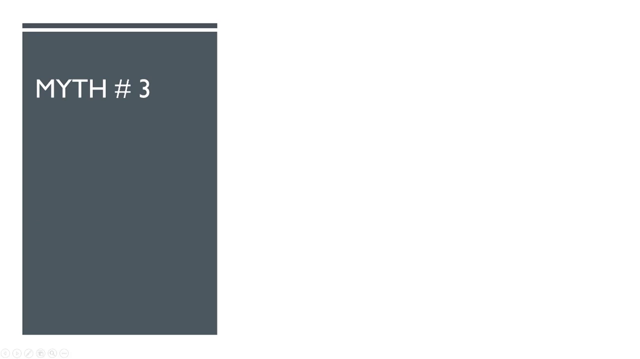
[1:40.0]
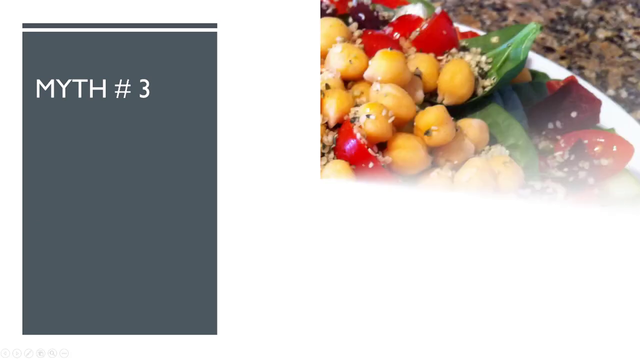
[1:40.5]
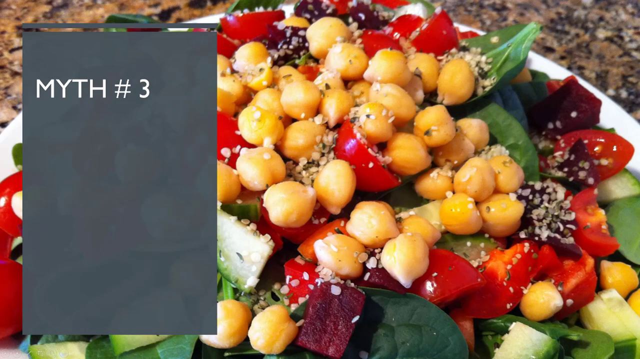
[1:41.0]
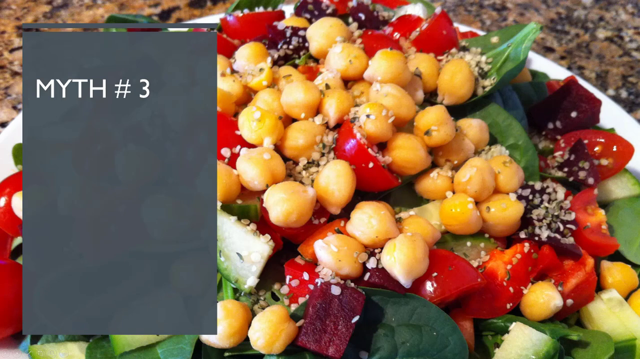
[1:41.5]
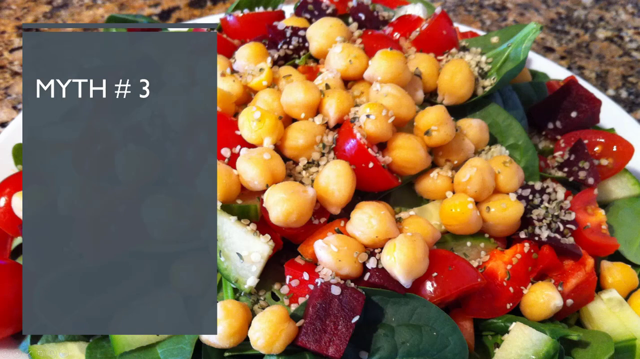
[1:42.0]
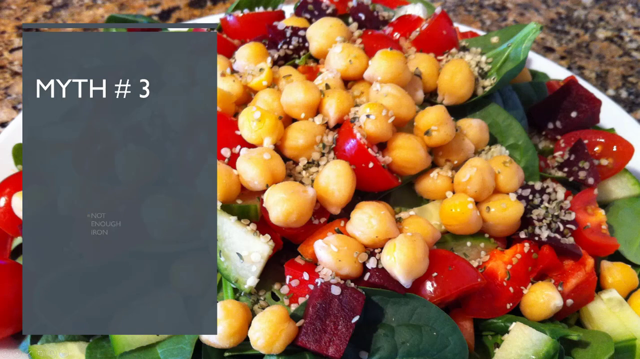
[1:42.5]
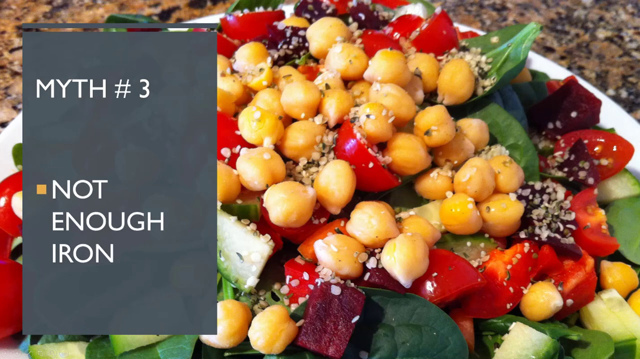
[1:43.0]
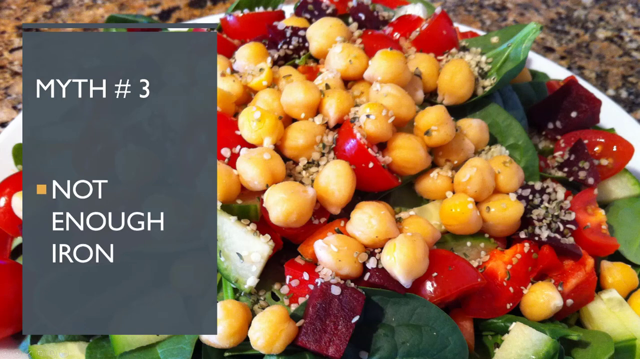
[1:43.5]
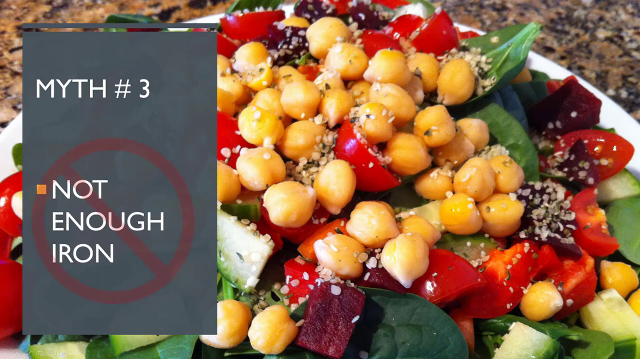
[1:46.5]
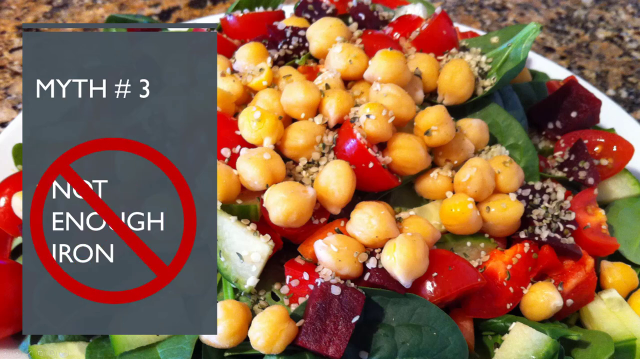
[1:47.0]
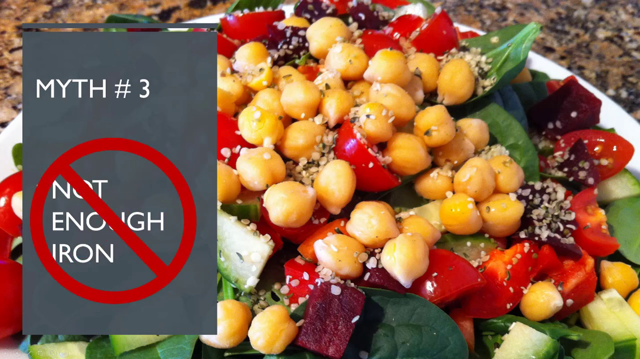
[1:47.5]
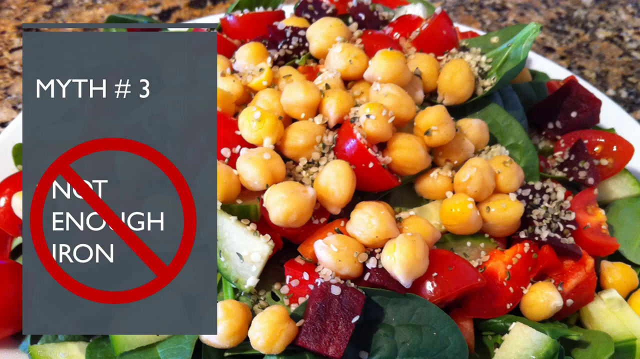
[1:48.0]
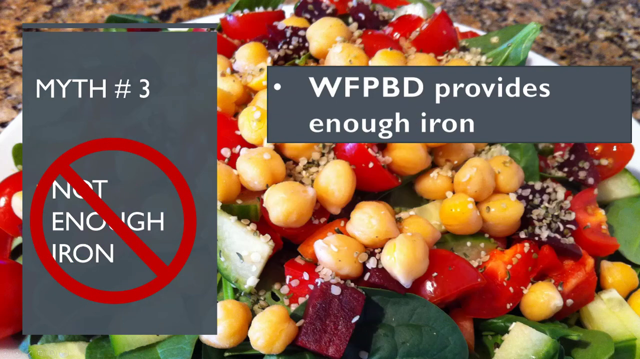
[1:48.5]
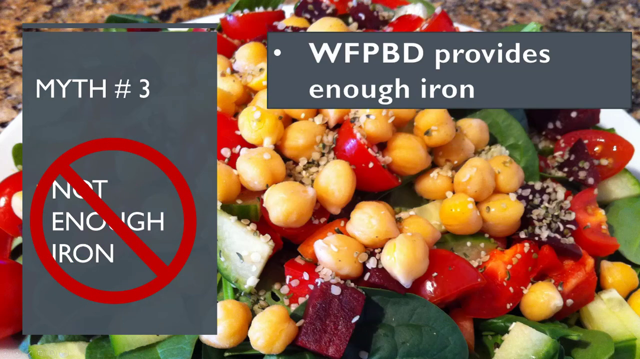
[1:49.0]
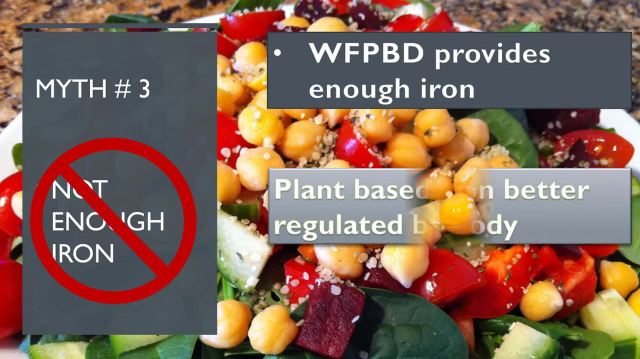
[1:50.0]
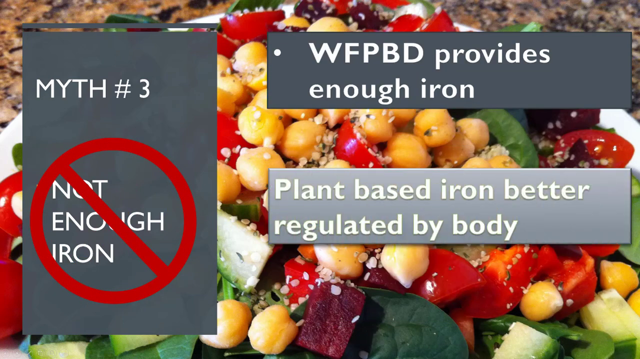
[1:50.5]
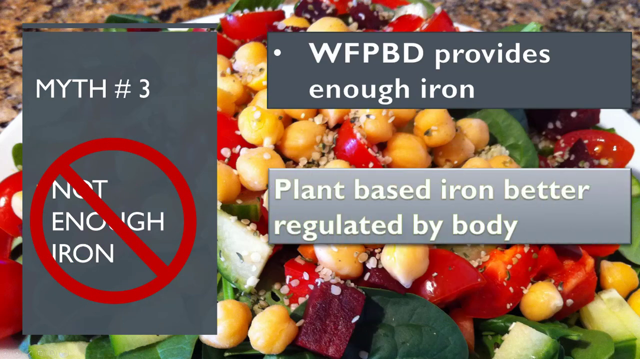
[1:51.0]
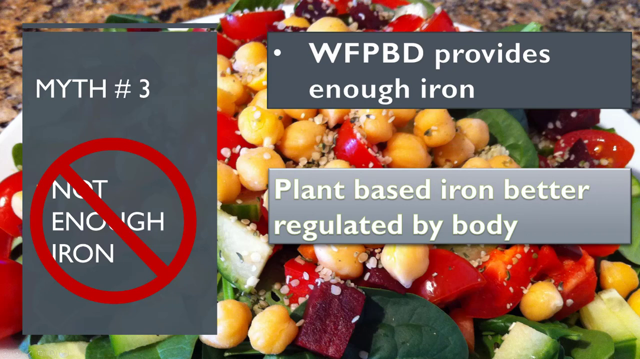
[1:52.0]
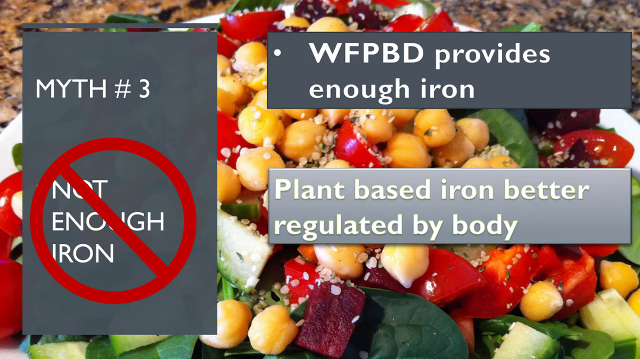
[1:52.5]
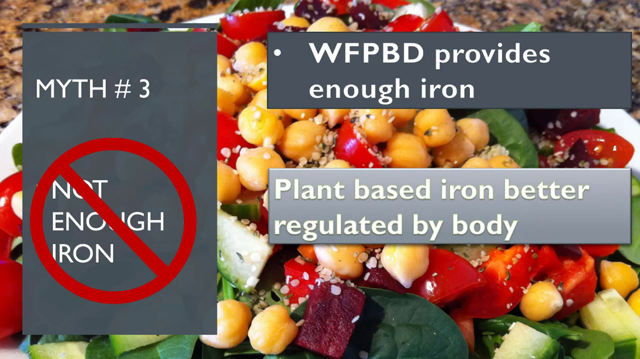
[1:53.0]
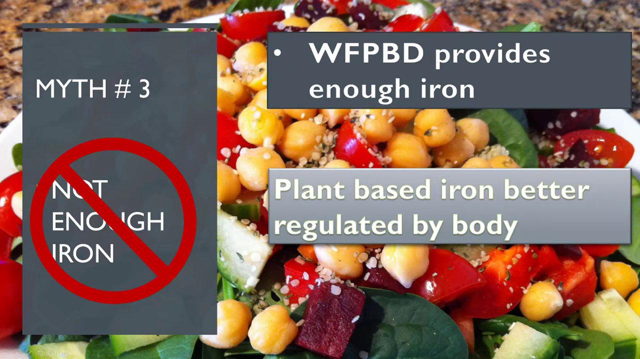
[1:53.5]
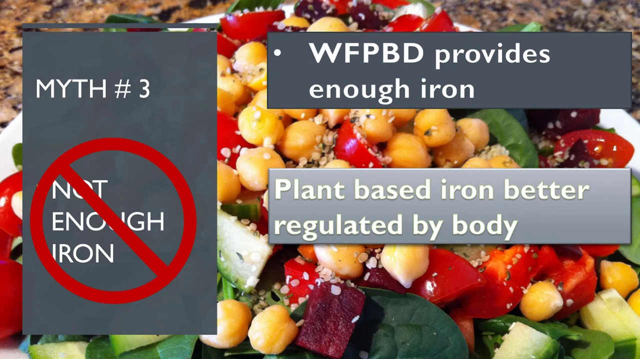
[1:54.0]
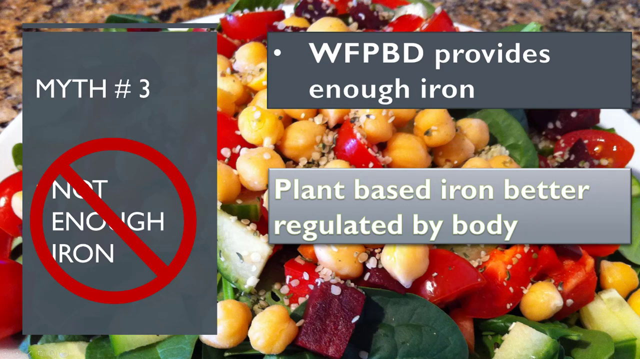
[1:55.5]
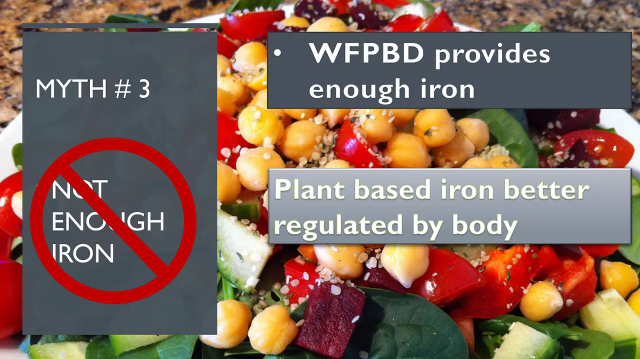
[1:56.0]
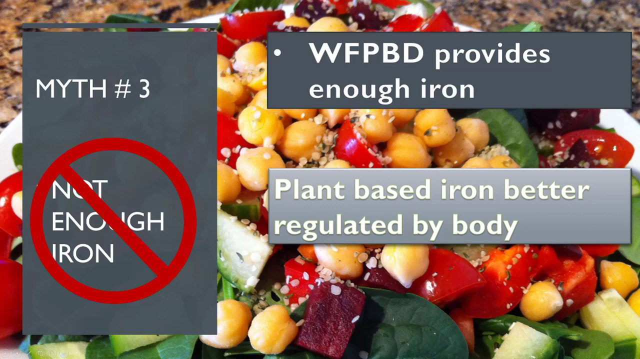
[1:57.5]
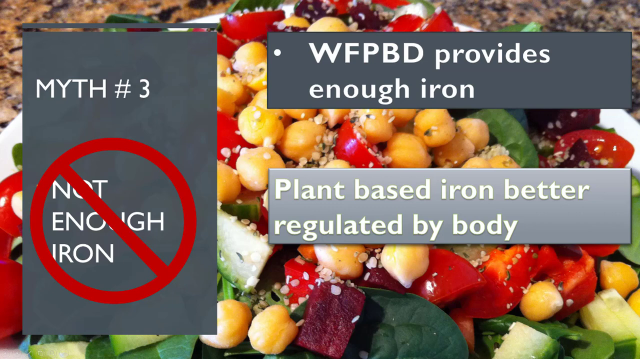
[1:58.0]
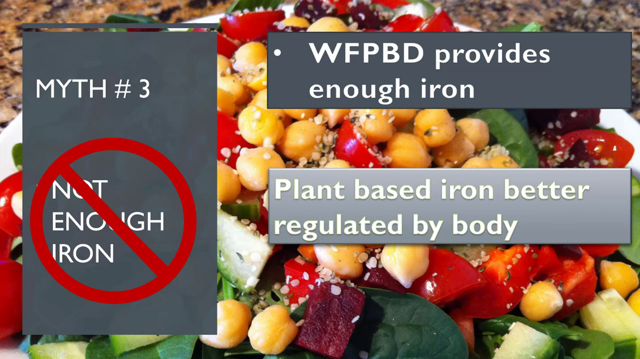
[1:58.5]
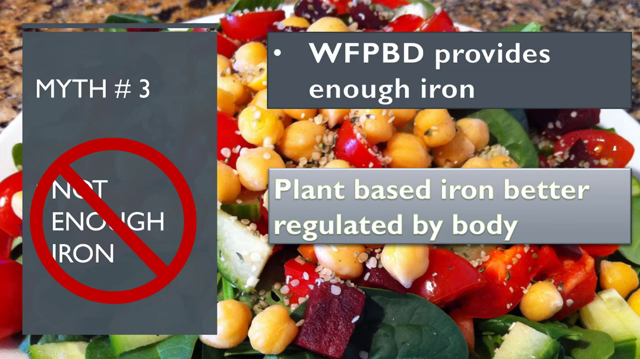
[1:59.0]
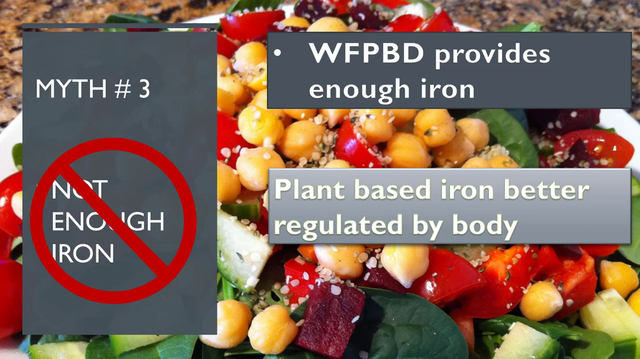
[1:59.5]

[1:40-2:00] The box reading "myth number three" remains as another transition reveals a salad made of vegetables such as spinach or kale, chia seeds, tomatoes, beets, cucumbers, and sesame seeds. The third myth at the bottom reads "not enough iron" before it is crossed out with the red circle with a line through it. More text then appears on the right side: the top text box states that WFPBD provides enough iron, and the bottom text box states that plant-based iron is better regulated by the body.